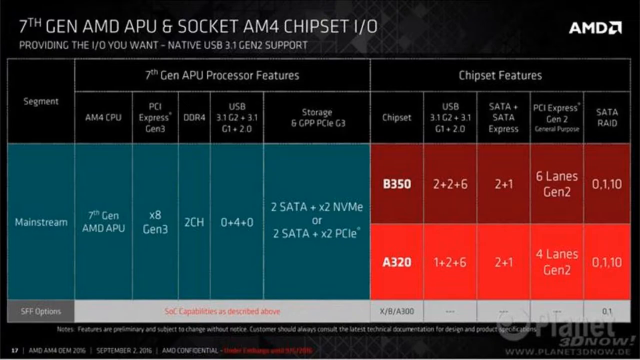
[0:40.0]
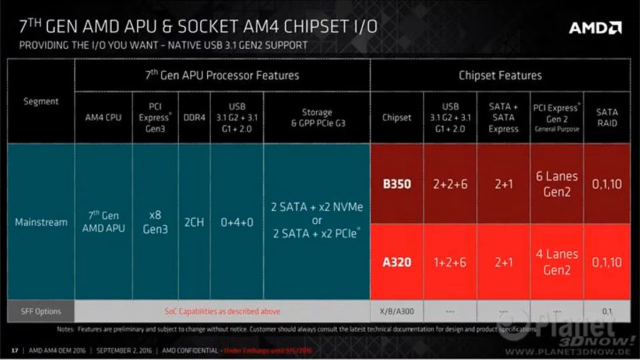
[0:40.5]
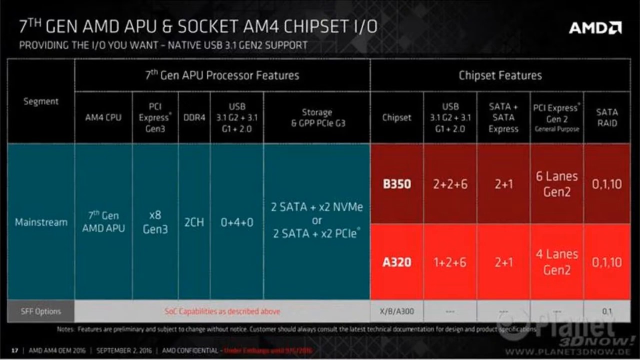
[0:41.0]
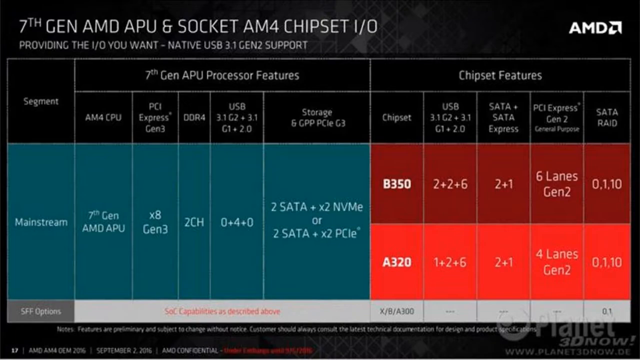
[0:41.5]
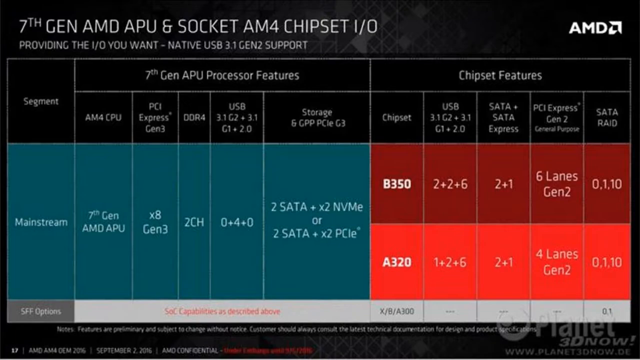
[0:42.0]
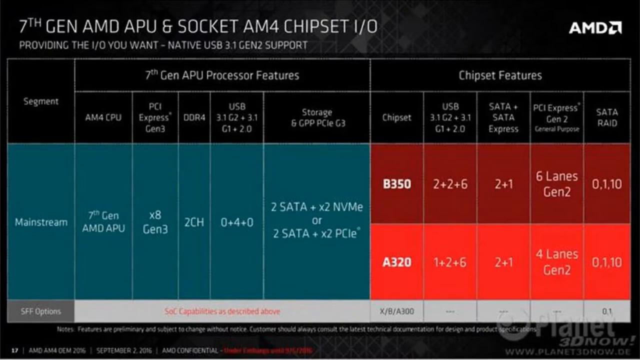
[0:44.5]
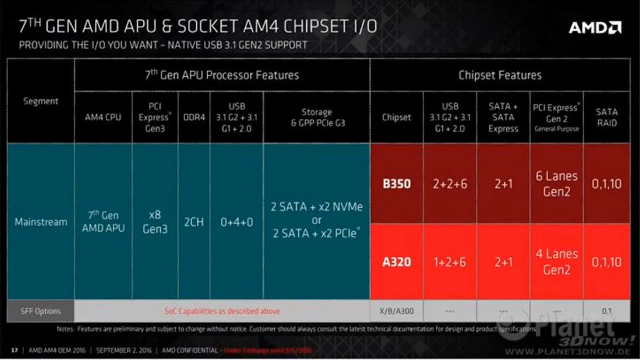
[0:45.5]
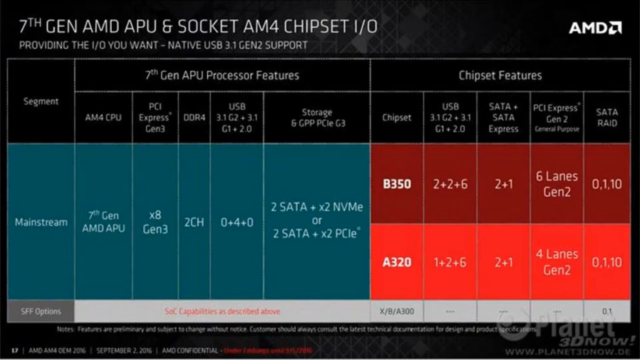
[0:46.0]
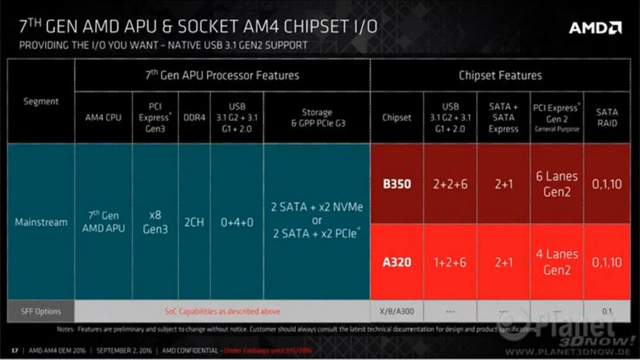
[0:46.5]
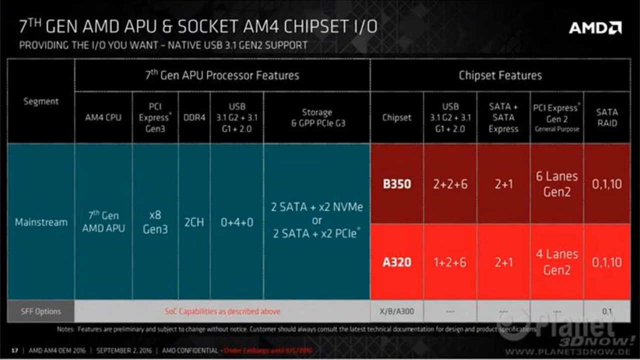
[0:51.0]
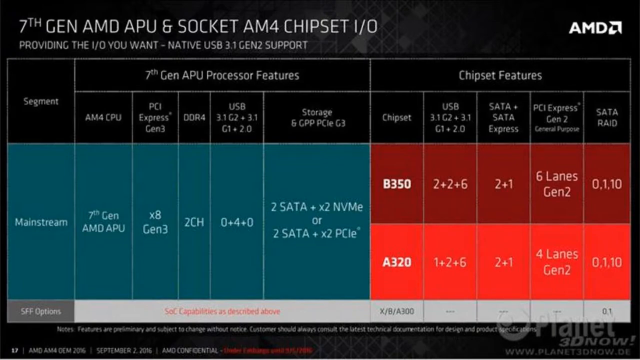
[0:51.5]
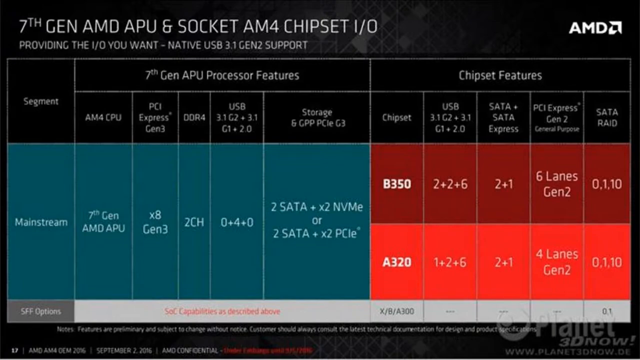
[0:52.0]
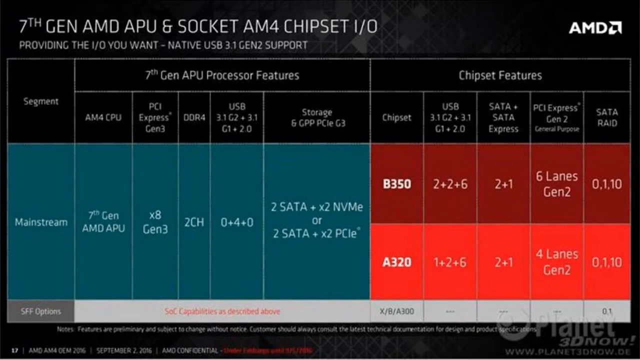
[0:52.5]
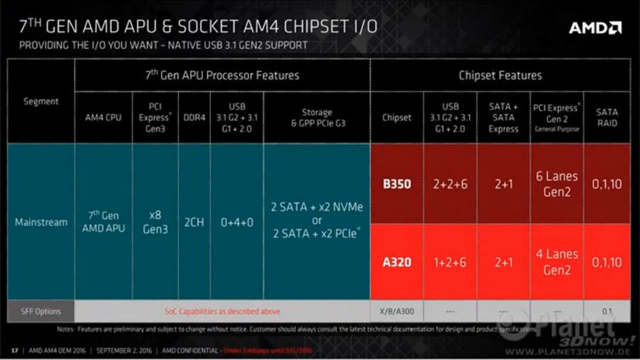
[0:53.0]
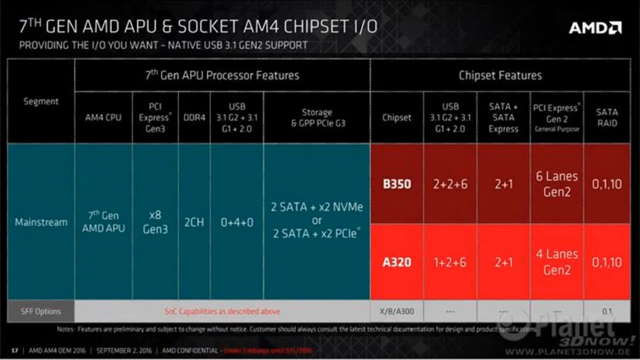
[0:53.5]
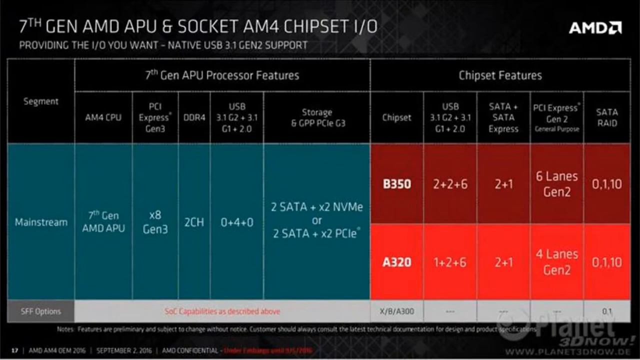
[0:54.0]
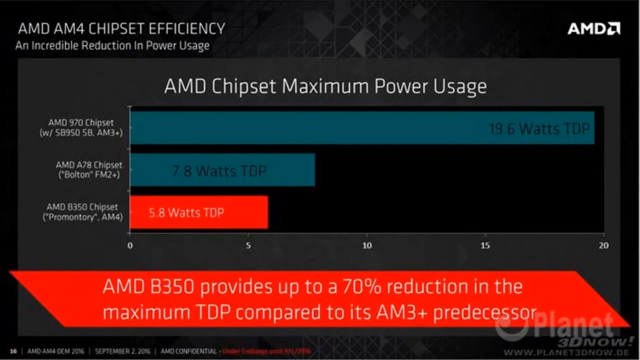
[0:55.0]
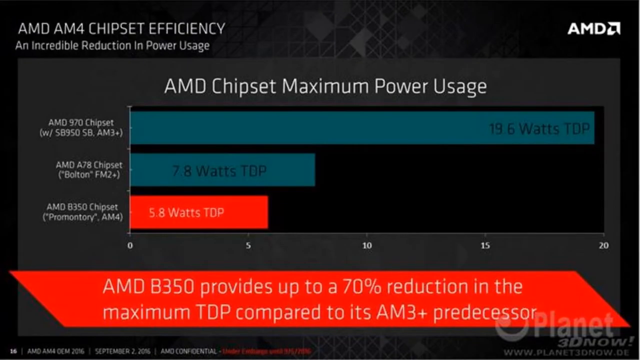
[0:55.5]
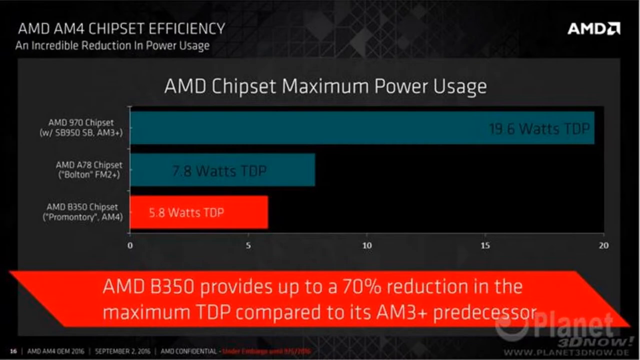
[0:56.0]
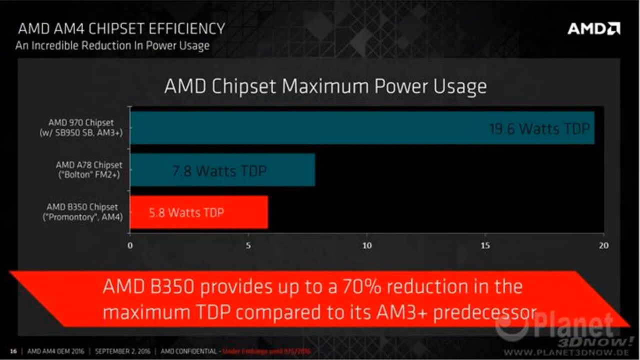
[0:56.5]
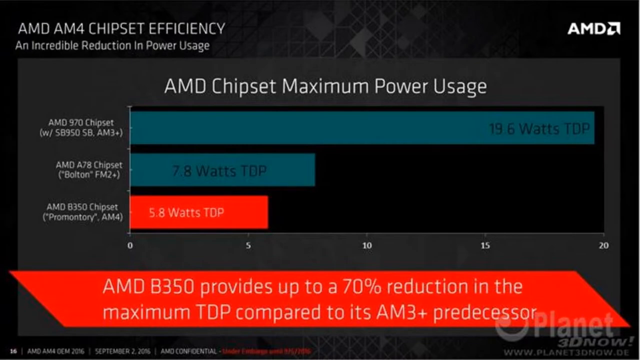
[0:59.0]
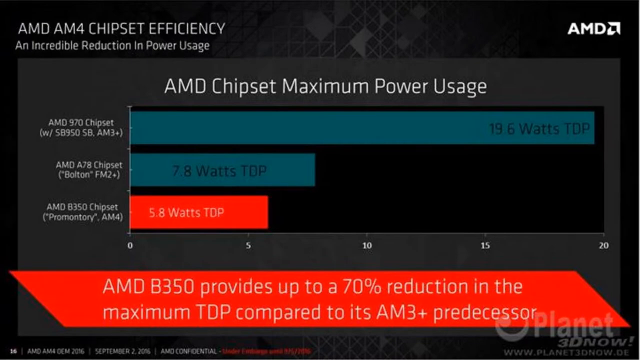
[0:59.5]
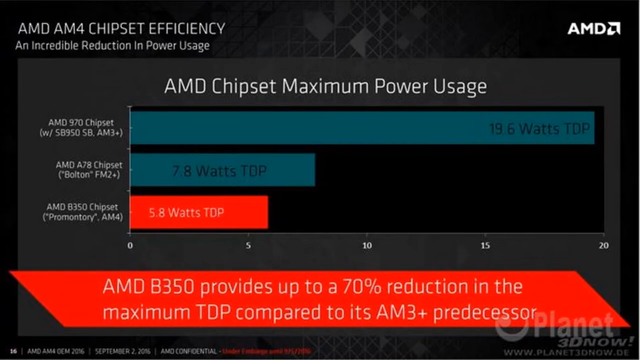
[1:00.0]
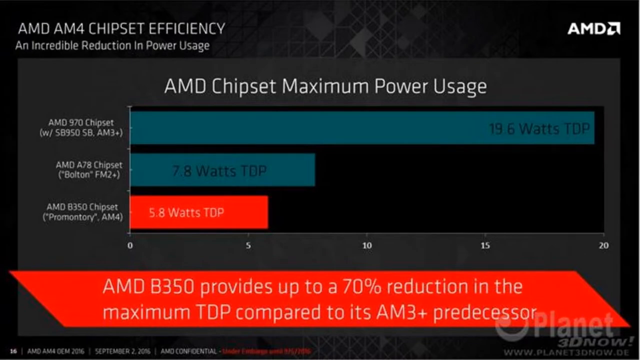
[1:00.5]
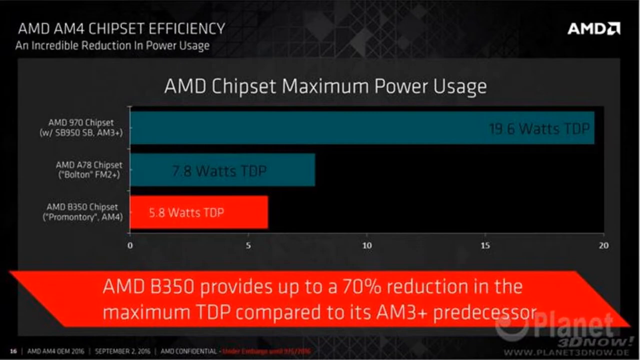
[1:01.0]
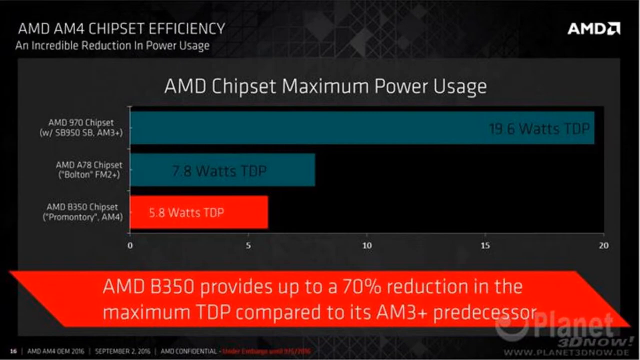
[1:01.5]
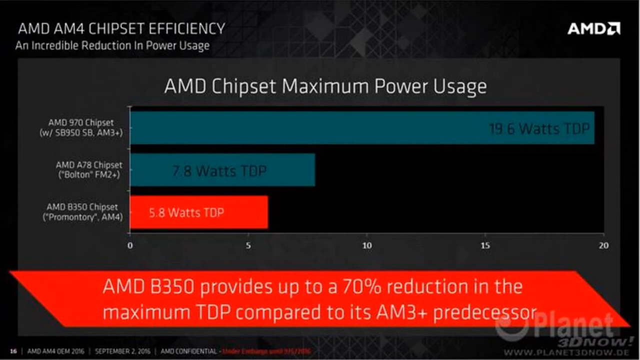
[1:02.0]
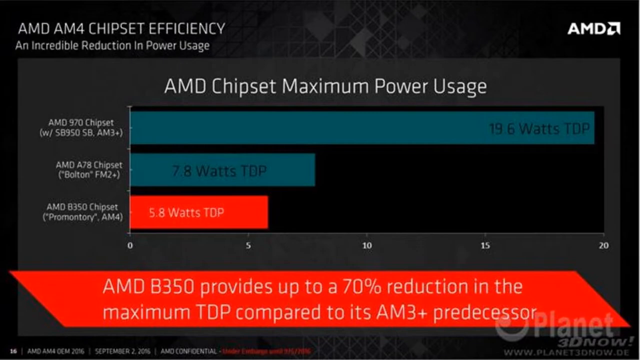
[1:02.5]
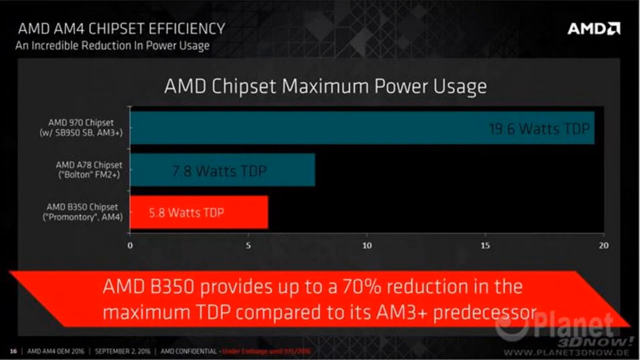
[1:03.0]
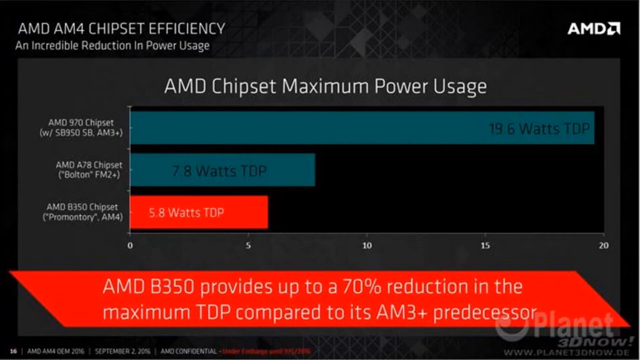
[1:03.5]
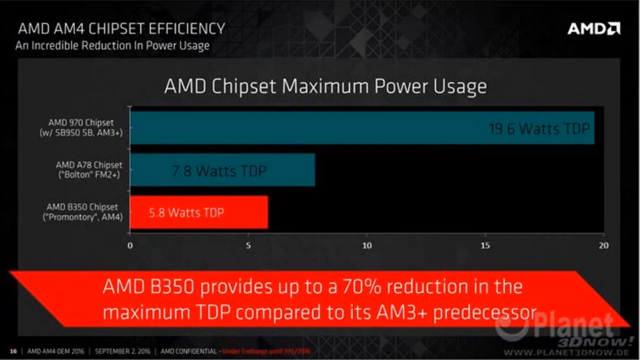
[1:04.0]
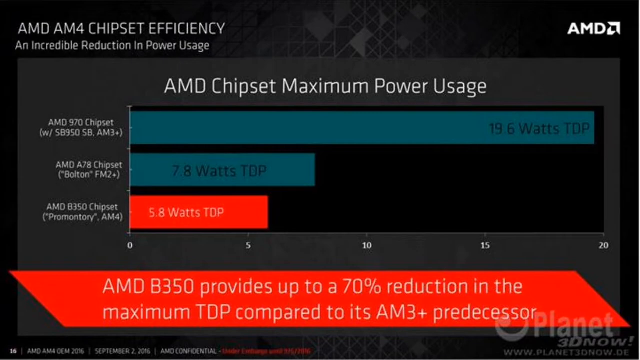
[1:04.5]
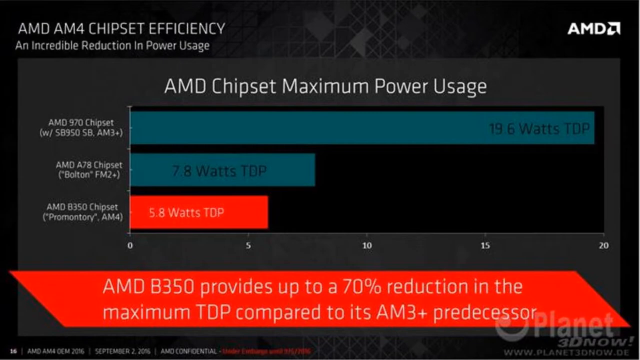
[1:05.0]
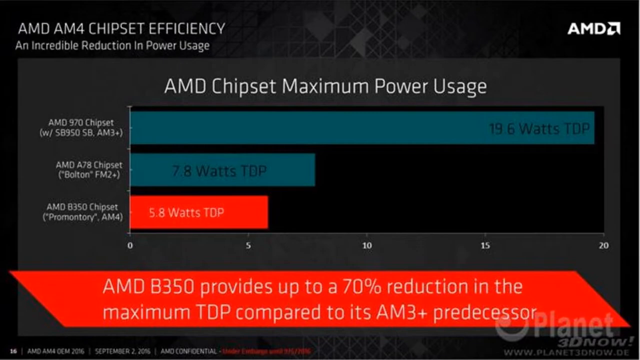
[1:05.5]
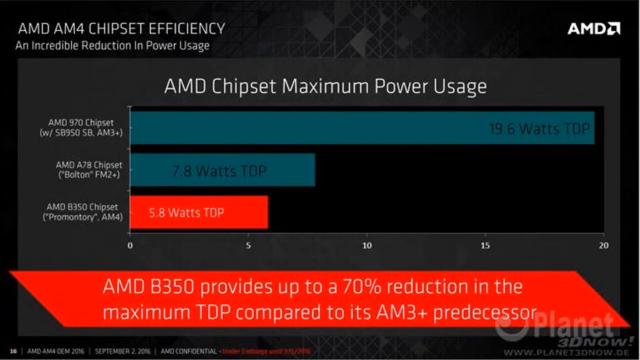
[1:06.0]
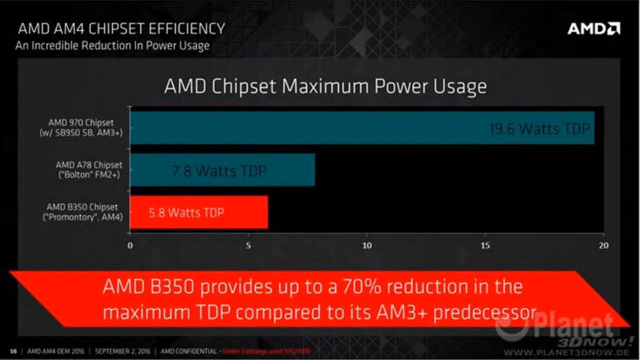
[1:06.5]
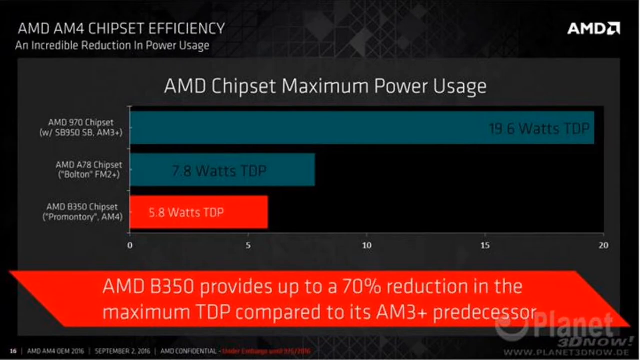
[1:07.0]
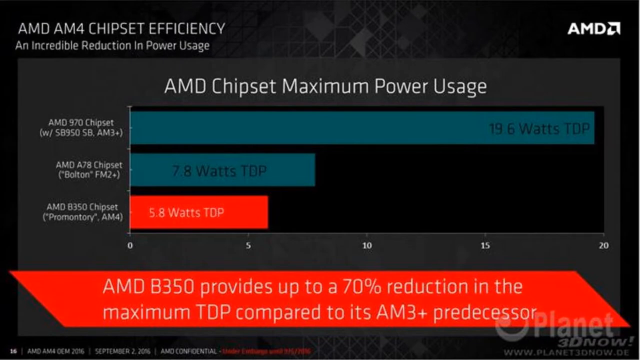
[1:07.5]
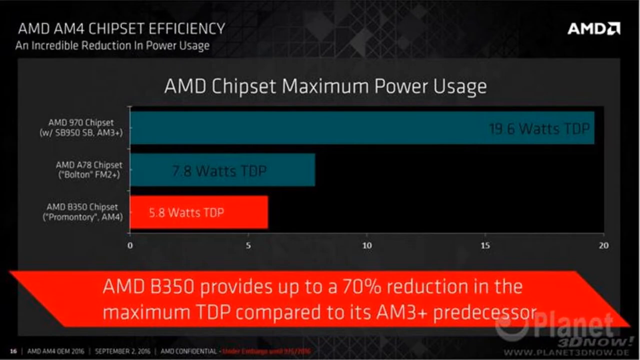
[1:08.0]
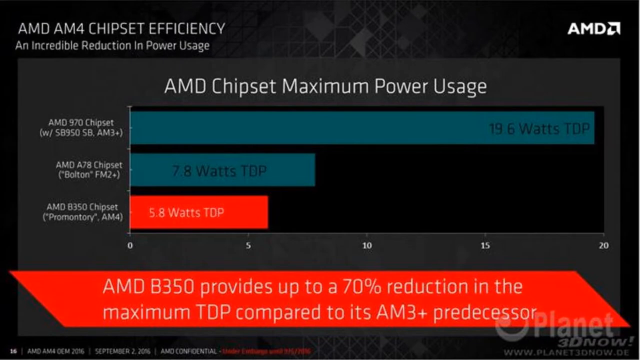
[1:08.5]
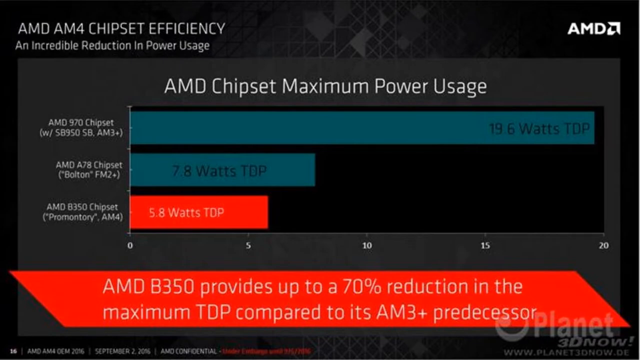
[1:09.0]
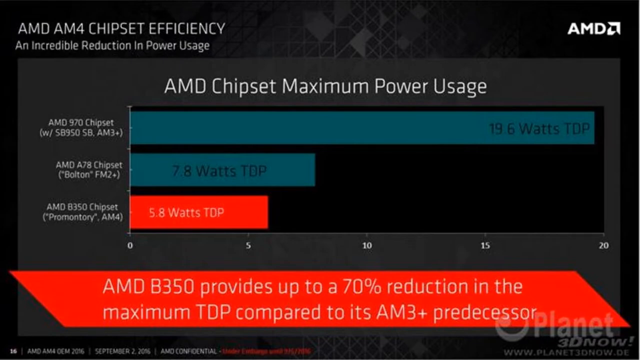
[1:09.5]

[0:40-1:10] The 7th Gen AMD APU and Socket AM4 chipset I/O screen, showing general features and chipset features, remains on display. It then switches to a new screen with a chart reading "AMD AM4 chipset efficiency," "incredible reduction in power usage," and "AMD chipset maximum power usage." The first entry is the AMD 970 chipset at 19.6 watts TDP, the AMD A78 chipset is at 7.8 watts TDP, and the AMD B350 chipset is at 5.8 watts TDP. The bar for the B350 has a red background. At the bottom, text states that the AMD B350 provides up to 70% reduction in maximum TDP compared to its AM3+ predecessors.